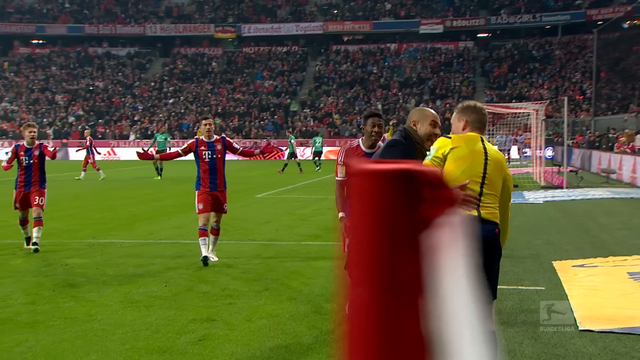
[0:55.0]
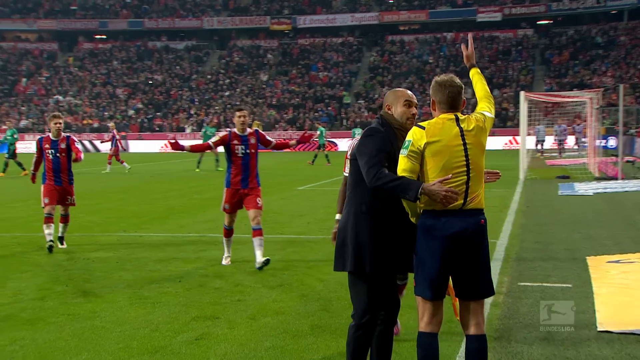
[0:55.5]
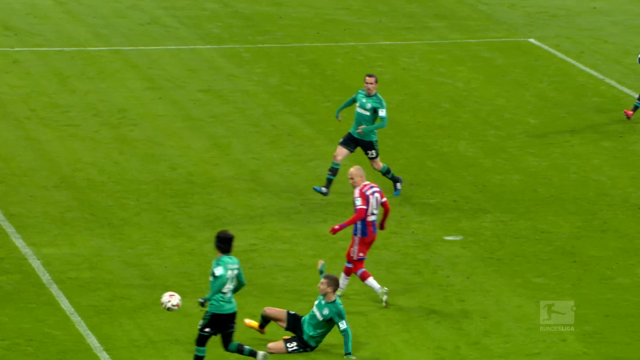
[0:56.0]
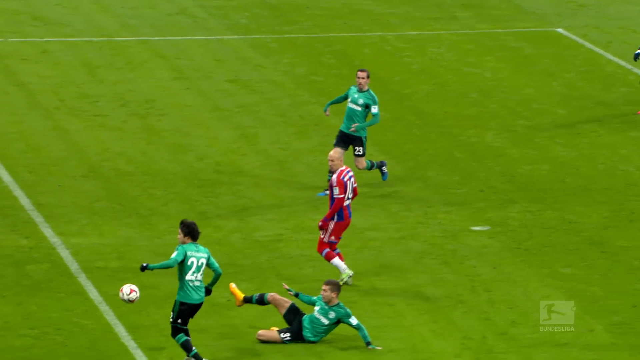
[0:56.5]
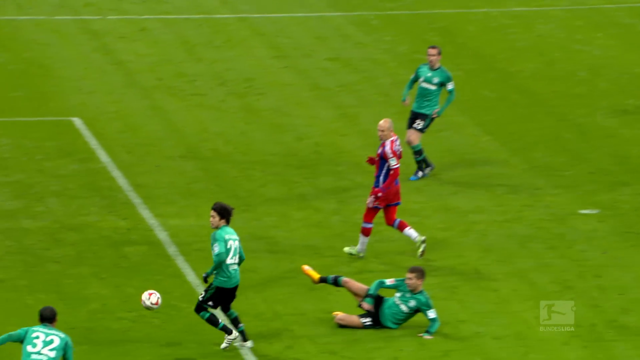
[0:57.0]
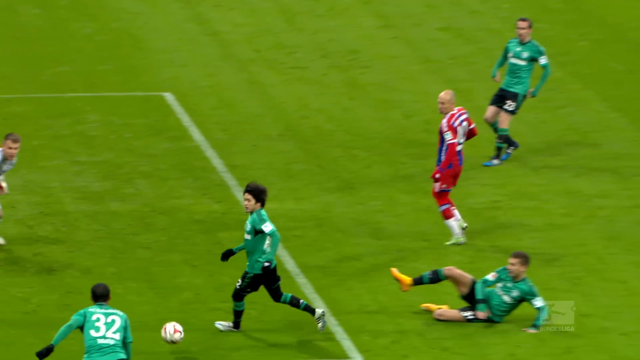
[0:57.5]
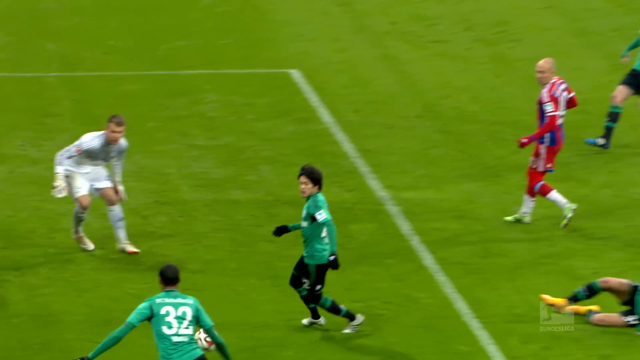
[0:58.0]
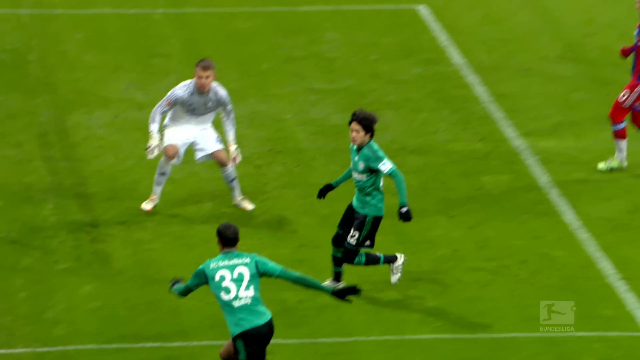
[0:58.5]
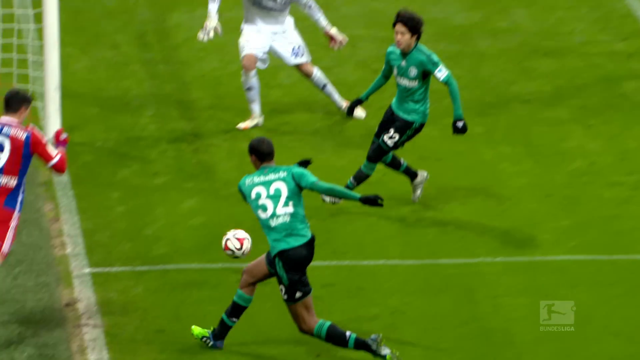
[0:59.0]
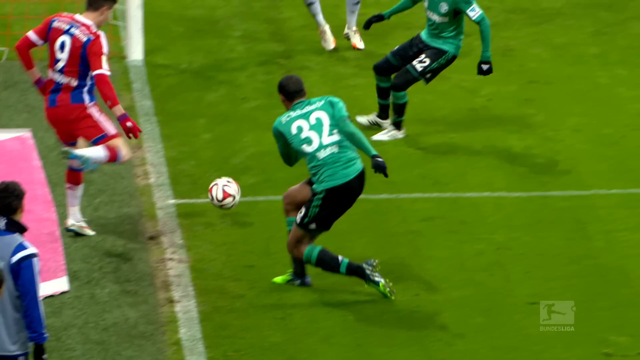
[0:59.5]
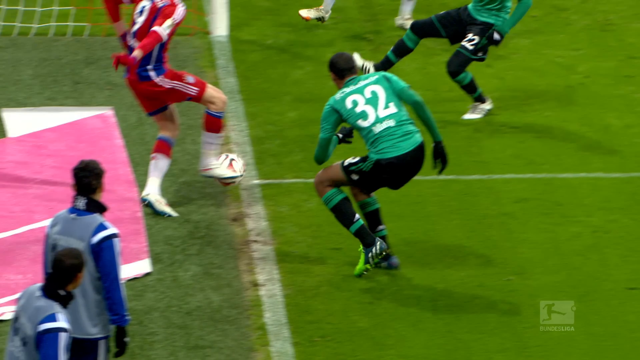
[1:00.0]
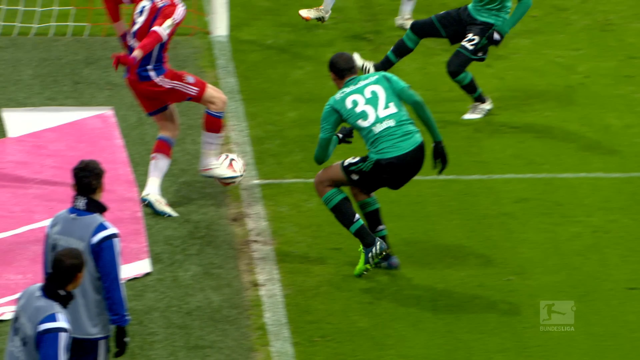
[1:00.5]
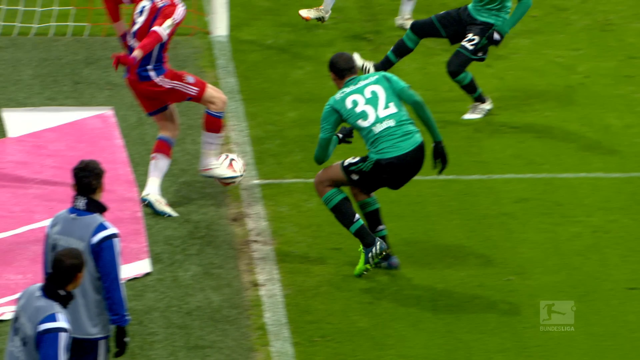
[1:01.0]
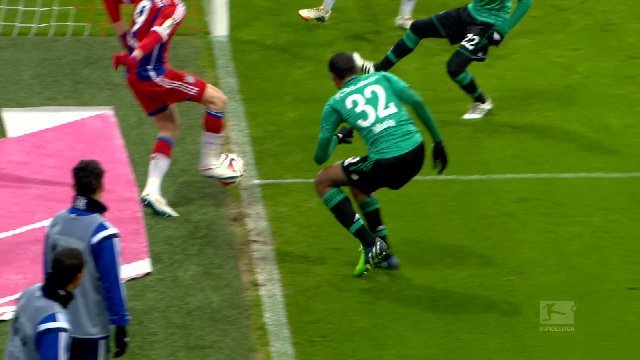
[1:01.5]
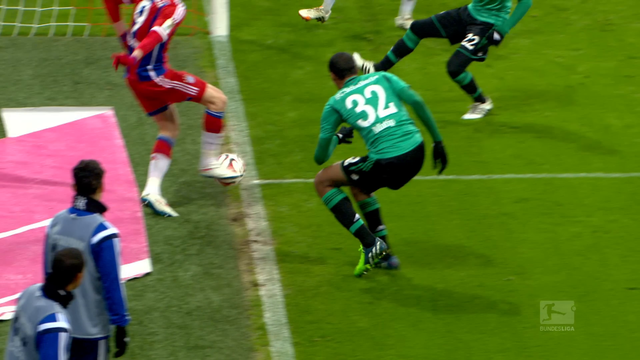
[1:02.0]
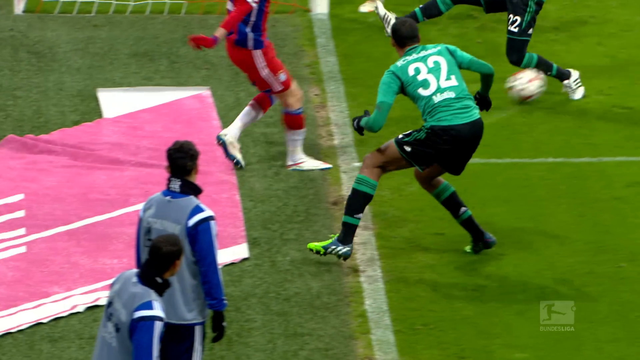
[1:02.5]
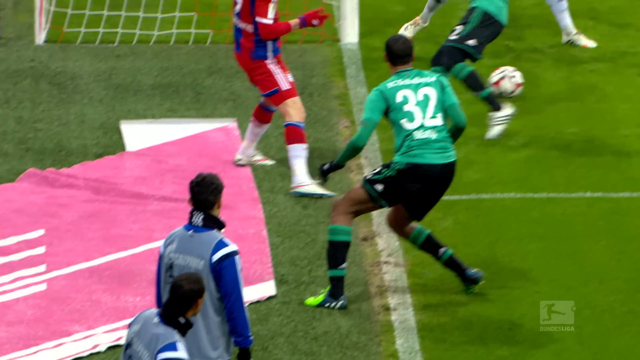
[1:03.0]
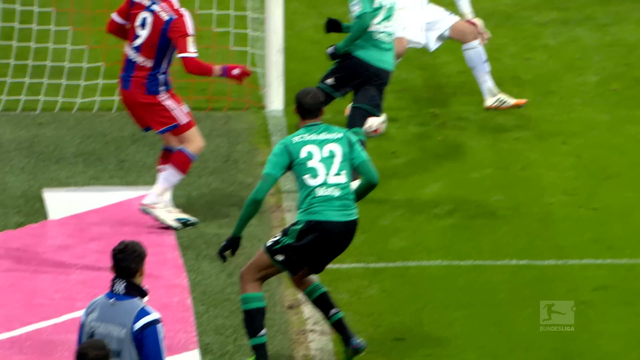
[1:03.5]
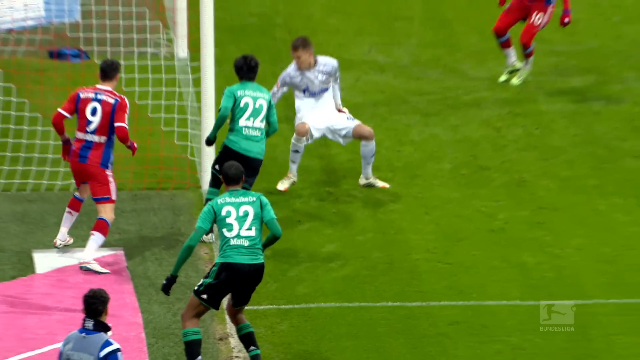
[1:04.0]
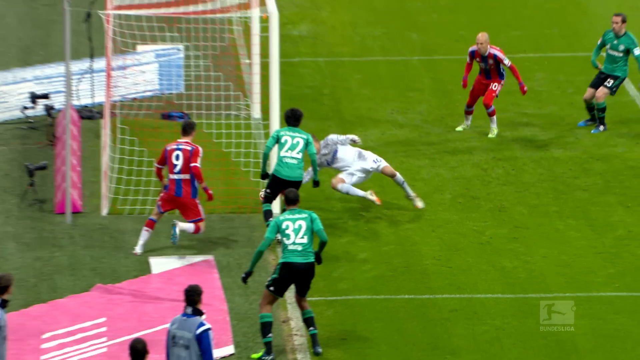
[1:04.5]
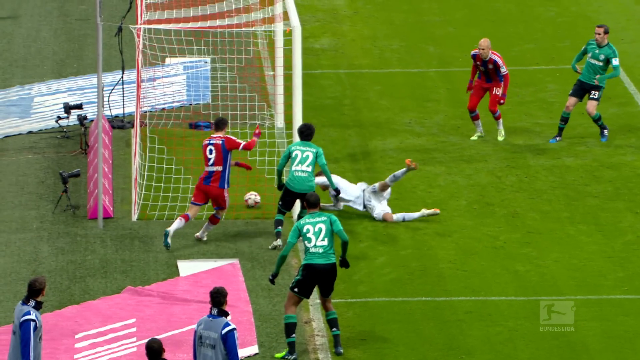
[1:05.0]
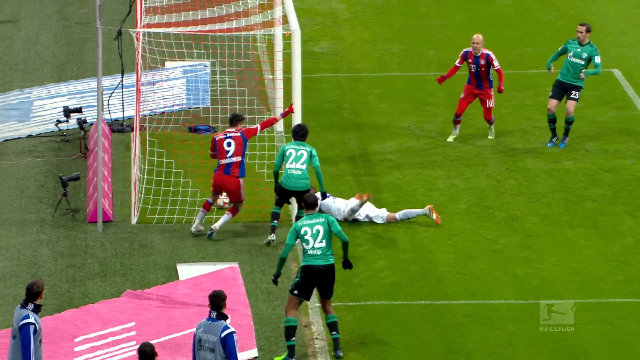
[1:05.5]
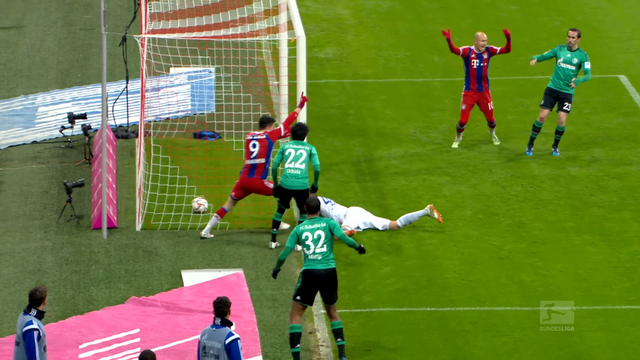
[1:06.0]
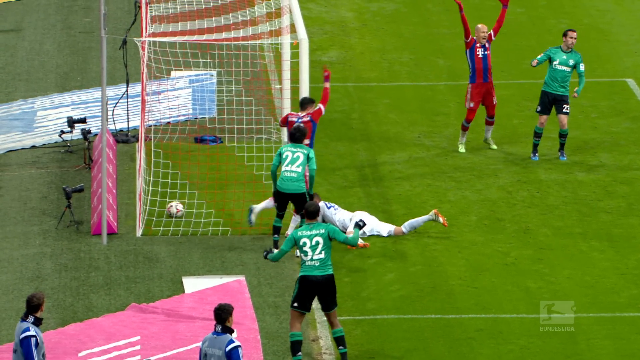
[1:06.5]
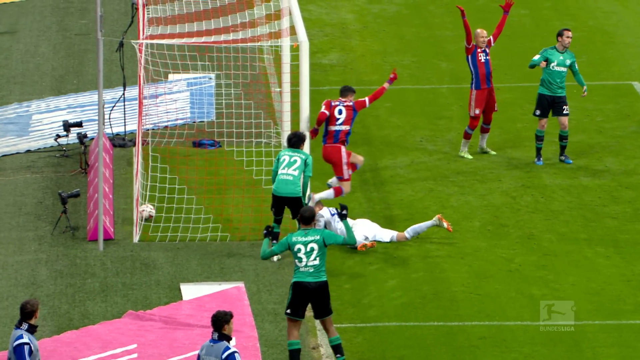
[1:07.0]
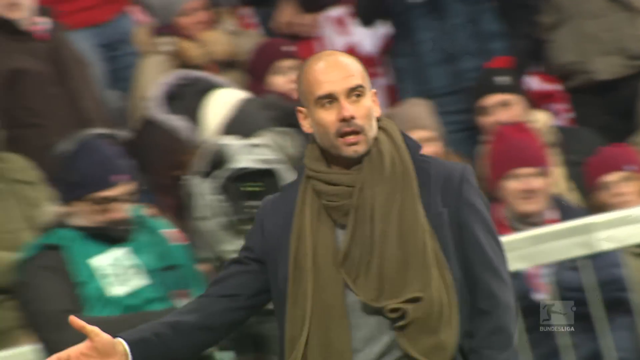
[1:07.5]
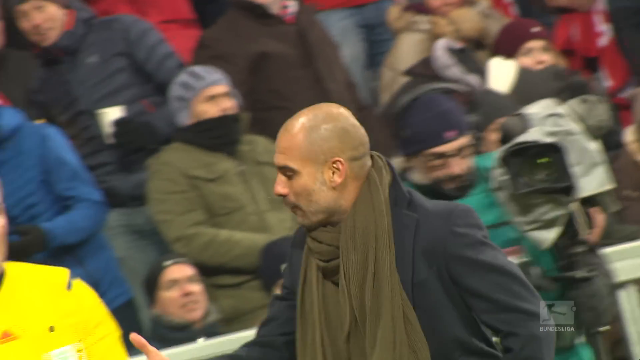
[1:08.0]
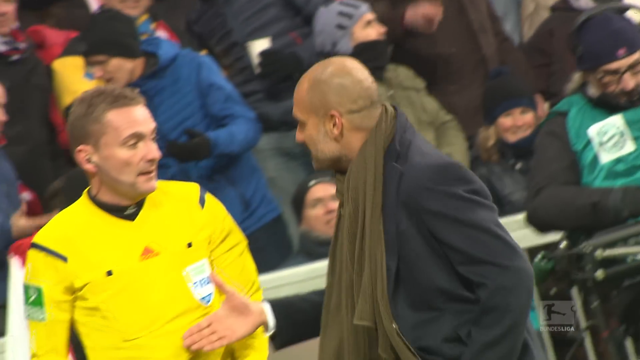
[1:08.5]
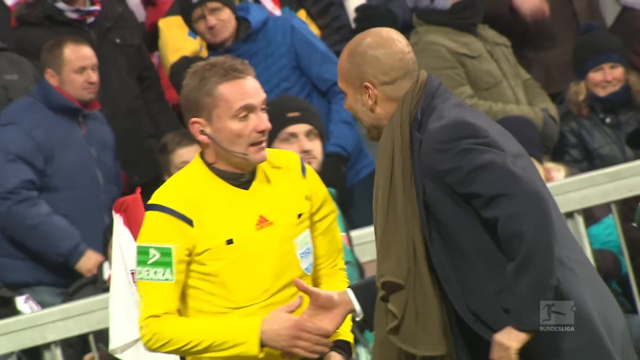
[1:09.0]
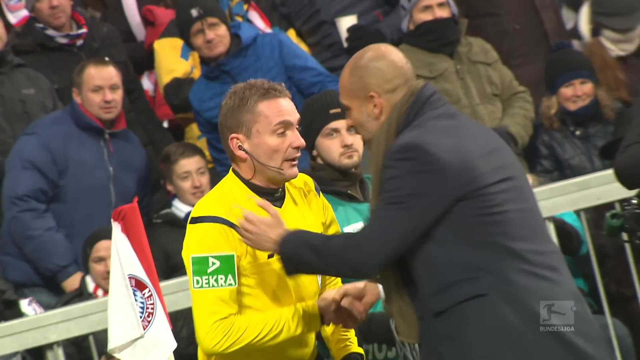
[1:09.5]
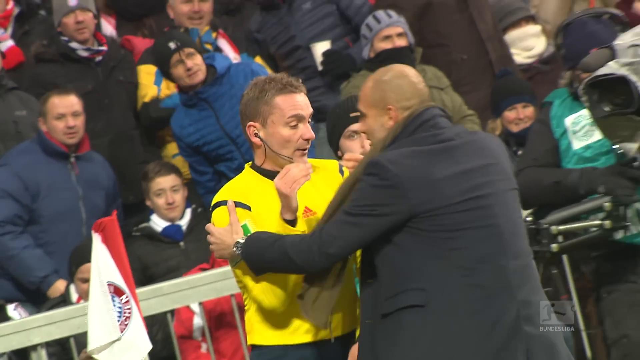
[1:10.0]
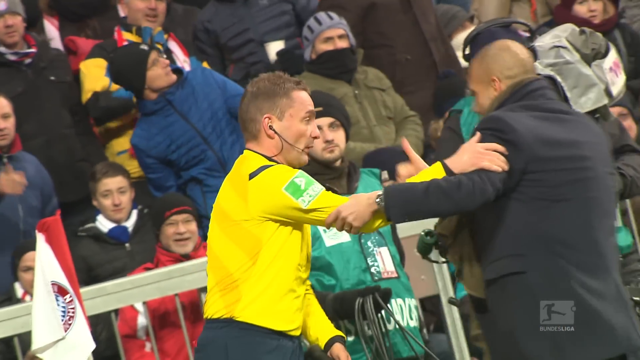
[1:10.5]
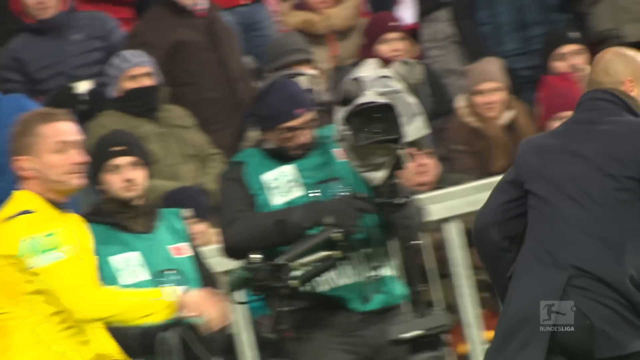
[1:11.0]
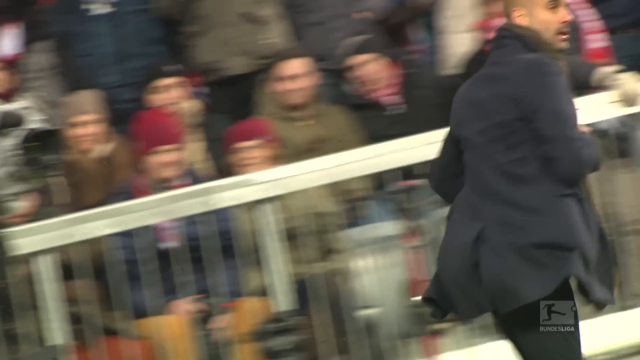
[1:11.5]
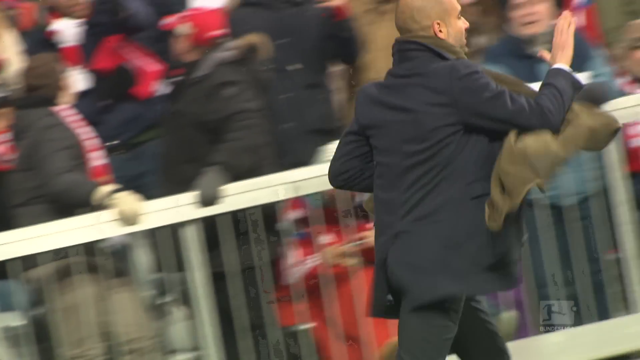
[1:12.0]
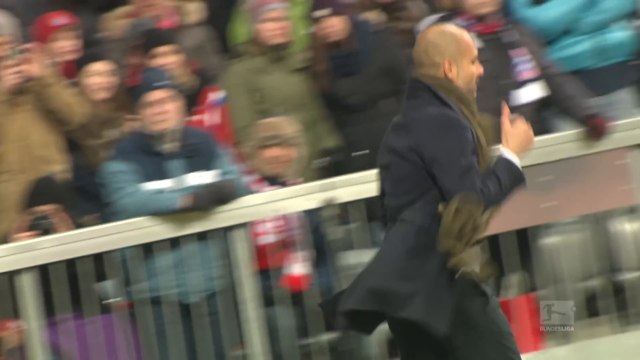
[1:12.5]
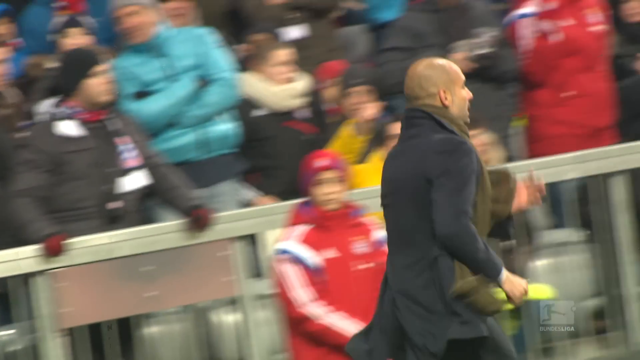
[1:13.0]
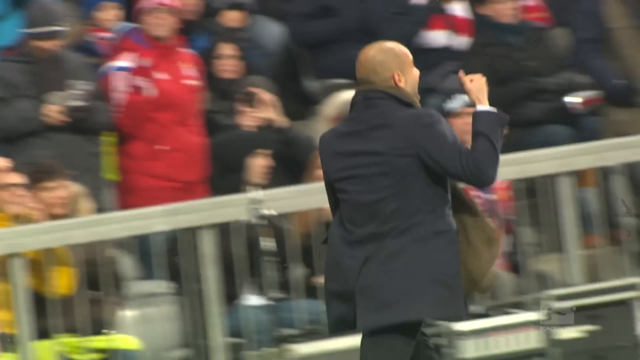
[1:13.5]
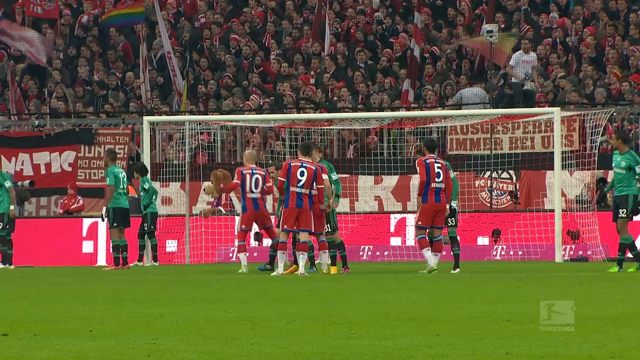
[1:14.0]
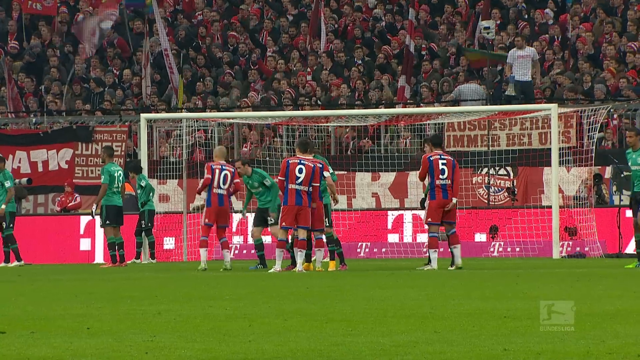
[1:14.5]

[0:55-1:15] Several players are on the field. On the red team, player number 10 is visible, his number on his back, and three other players wear green. The focus goes in and out, and more players appear. The soccer ball is right in front of player number 22, who wears green, and player number 32 is also seen. Suddenly player 9, from outside the line, kicks the ball near the soccer goal in the background. The ball is then struck by a player wearing all white who is just in front of and offset from the goalpost; he seems to kick it directly into the goal and scores. After scoring, he appears to fall face down on the ground in a sort of celebration and fit of ecstasy.